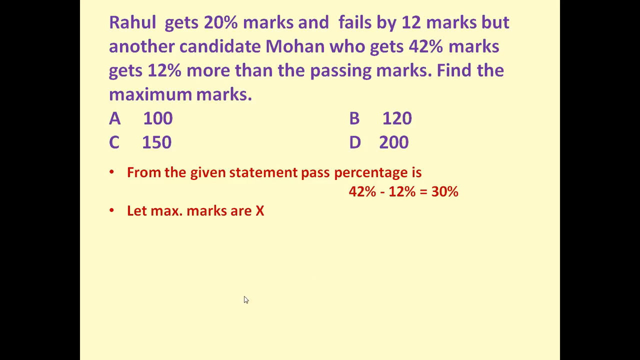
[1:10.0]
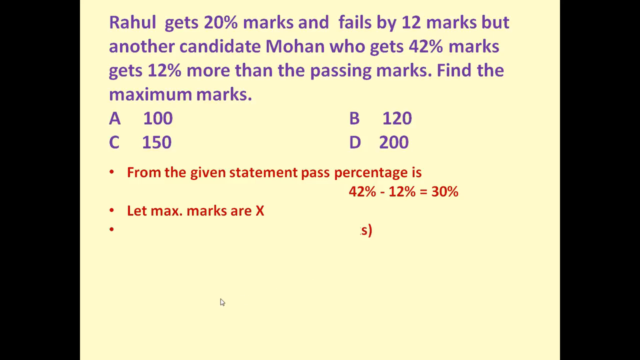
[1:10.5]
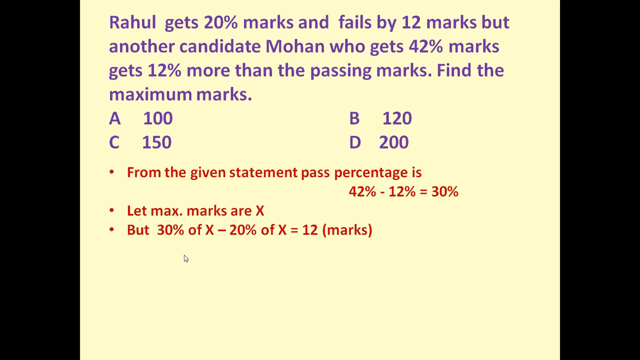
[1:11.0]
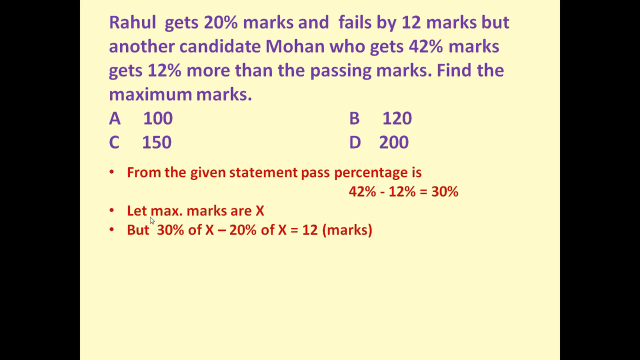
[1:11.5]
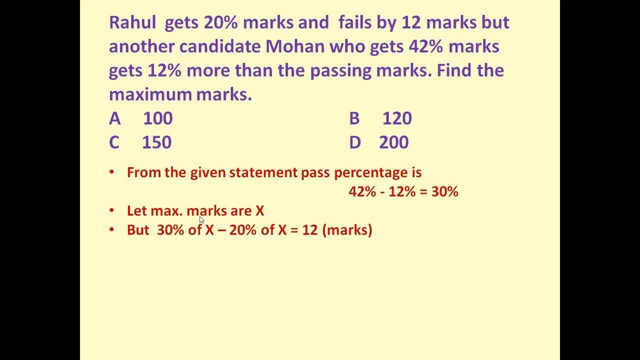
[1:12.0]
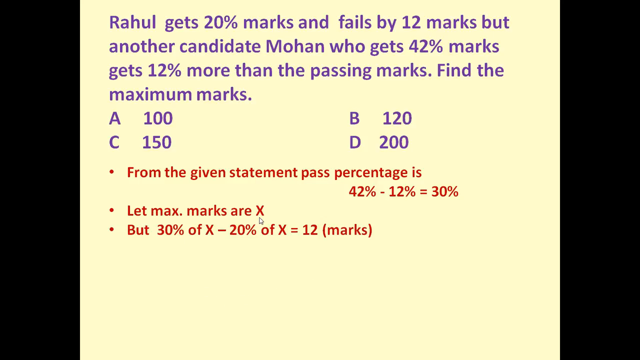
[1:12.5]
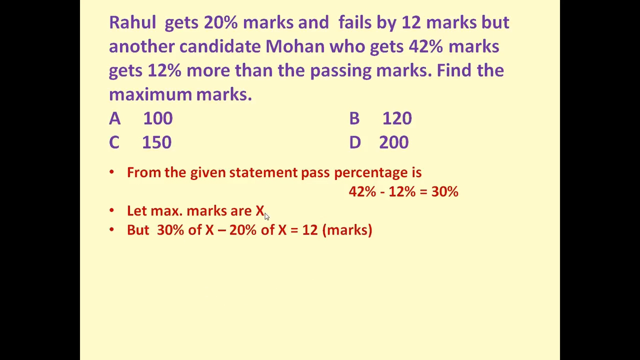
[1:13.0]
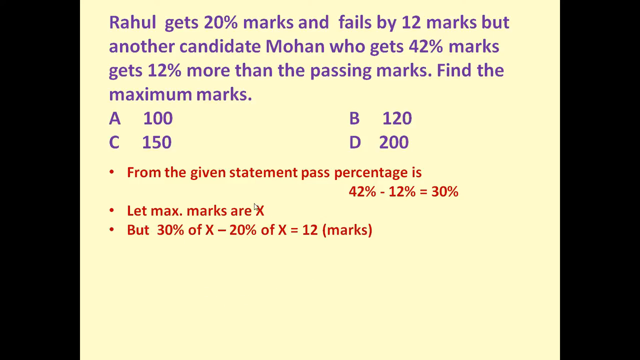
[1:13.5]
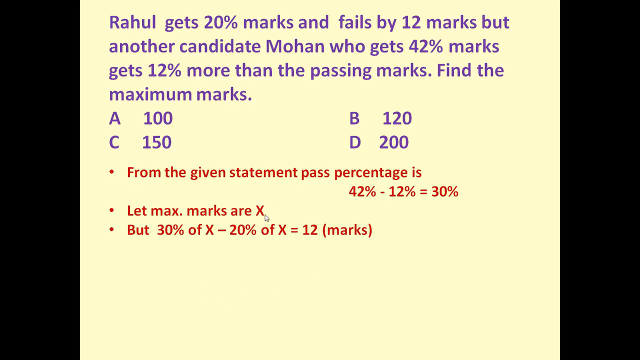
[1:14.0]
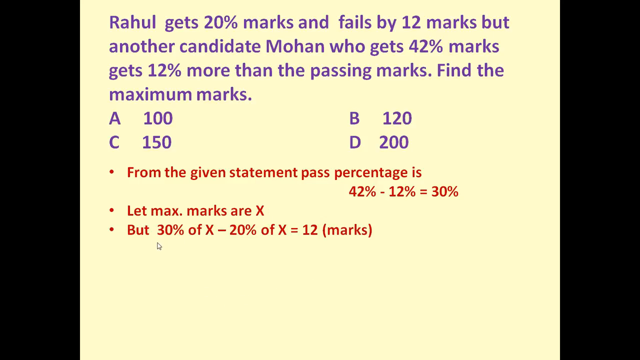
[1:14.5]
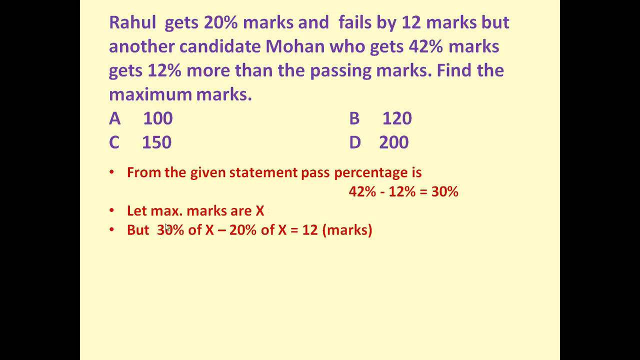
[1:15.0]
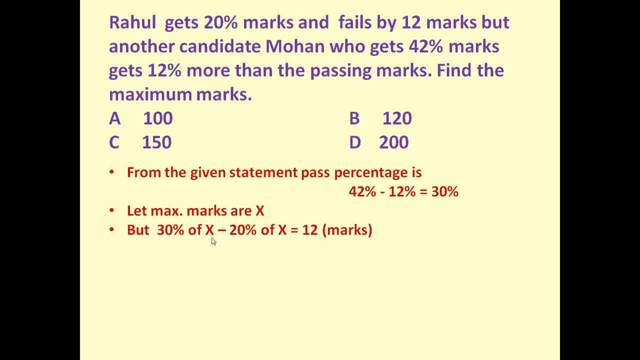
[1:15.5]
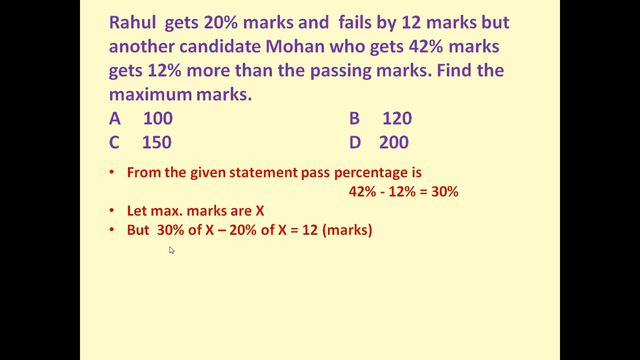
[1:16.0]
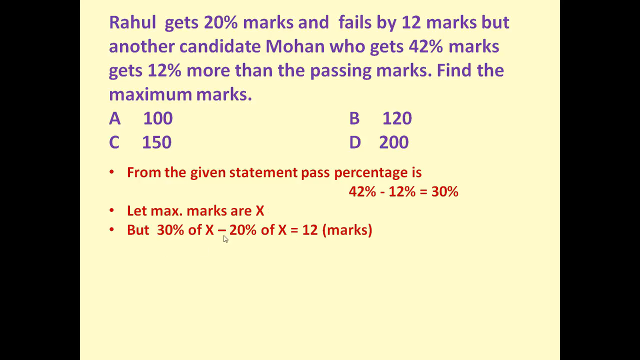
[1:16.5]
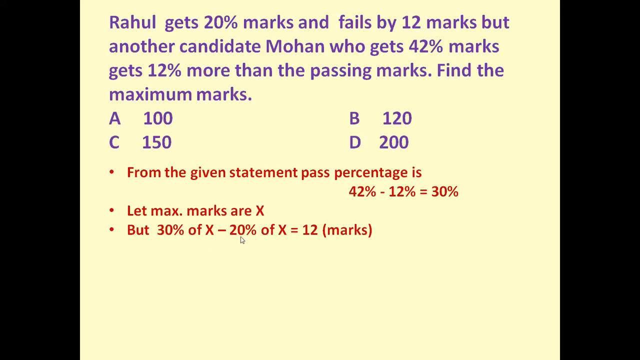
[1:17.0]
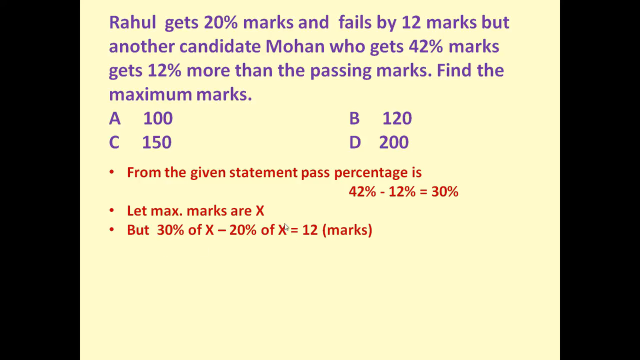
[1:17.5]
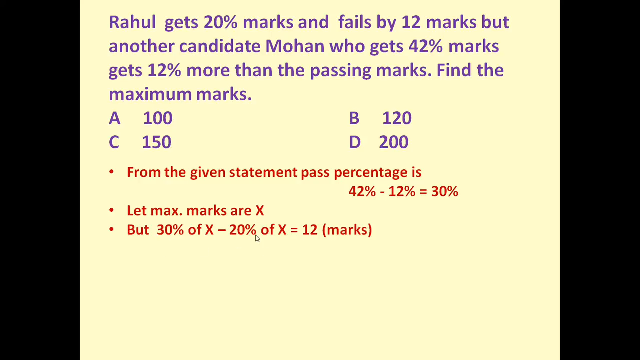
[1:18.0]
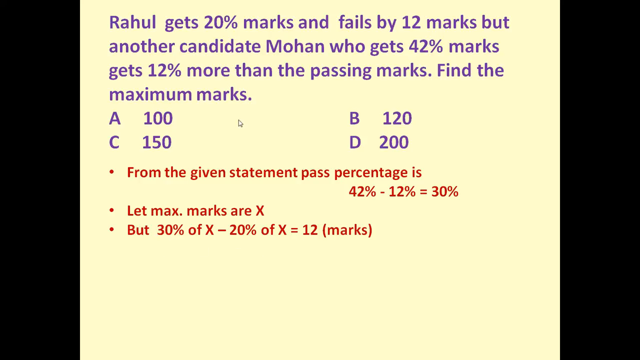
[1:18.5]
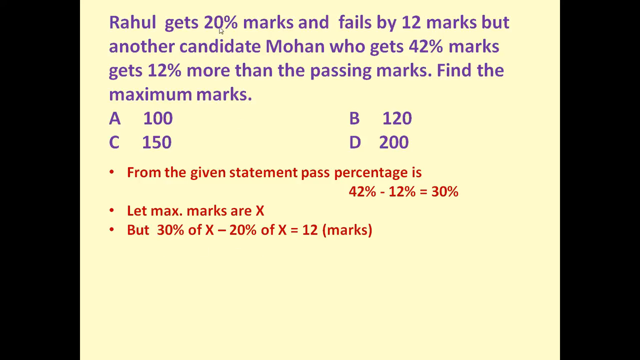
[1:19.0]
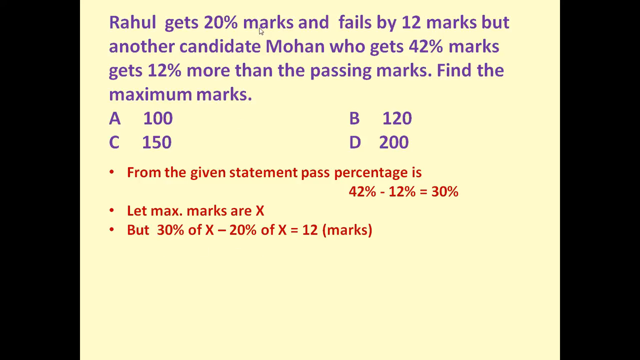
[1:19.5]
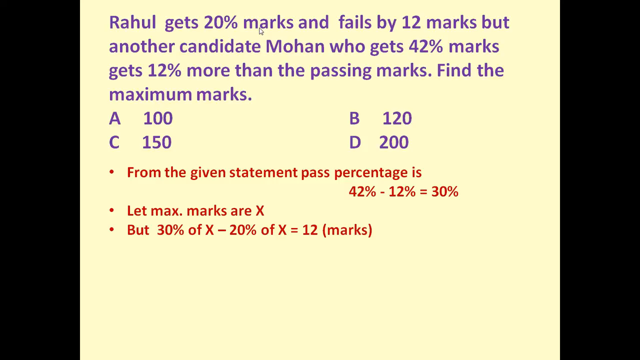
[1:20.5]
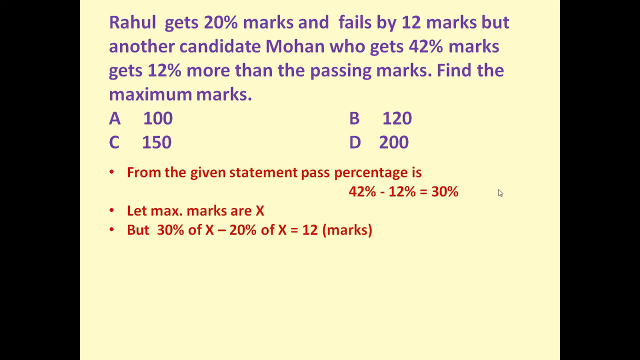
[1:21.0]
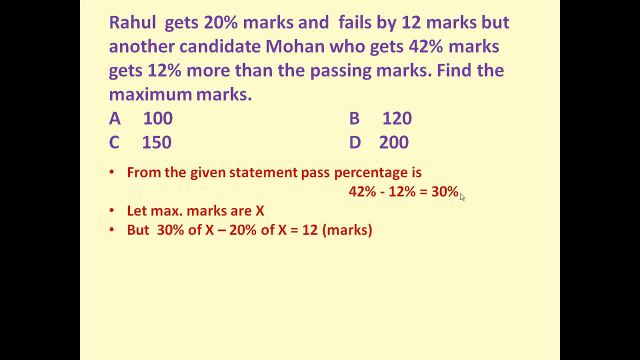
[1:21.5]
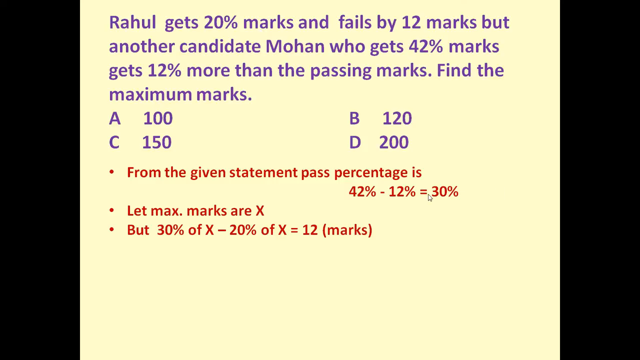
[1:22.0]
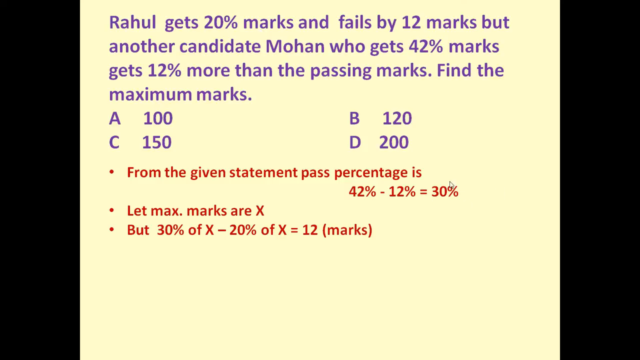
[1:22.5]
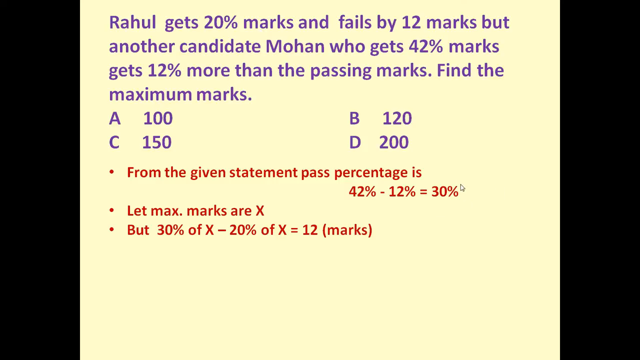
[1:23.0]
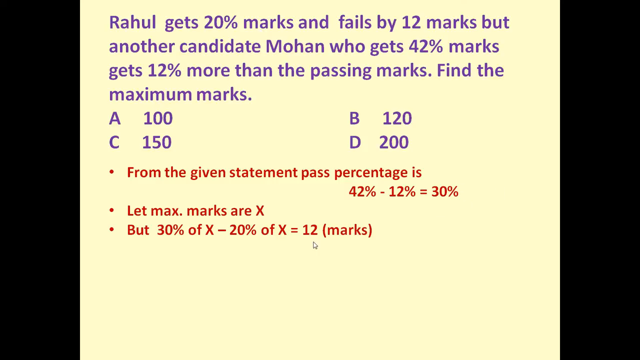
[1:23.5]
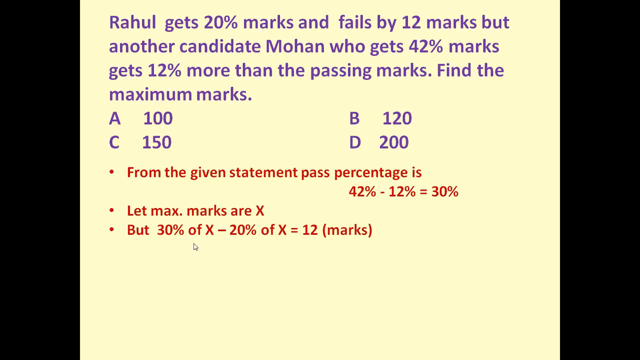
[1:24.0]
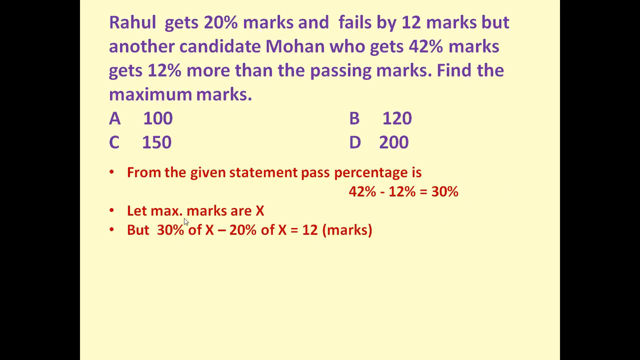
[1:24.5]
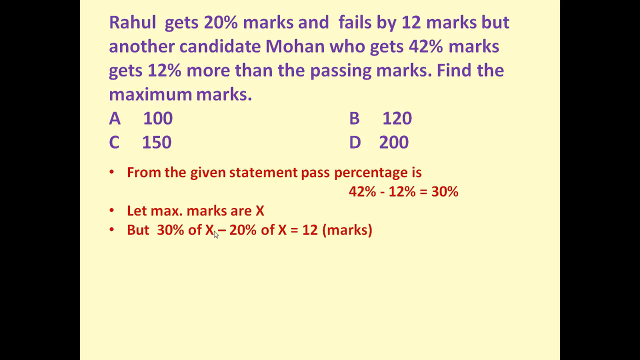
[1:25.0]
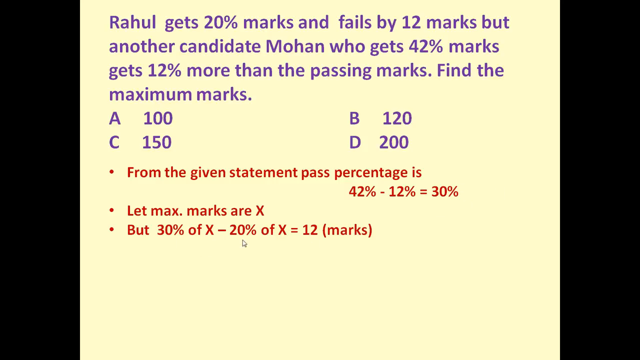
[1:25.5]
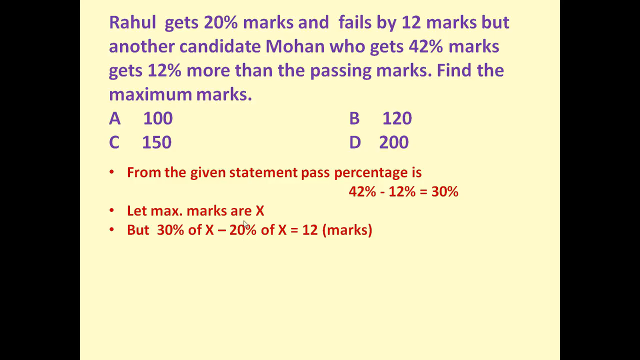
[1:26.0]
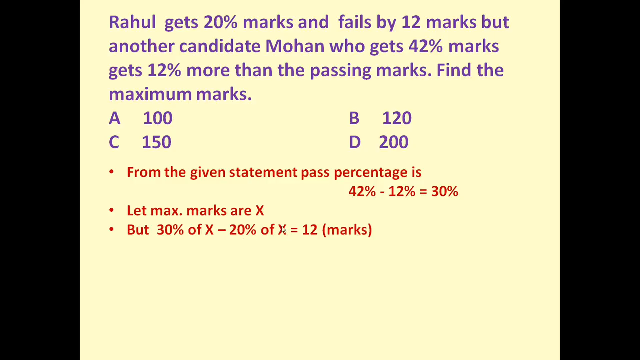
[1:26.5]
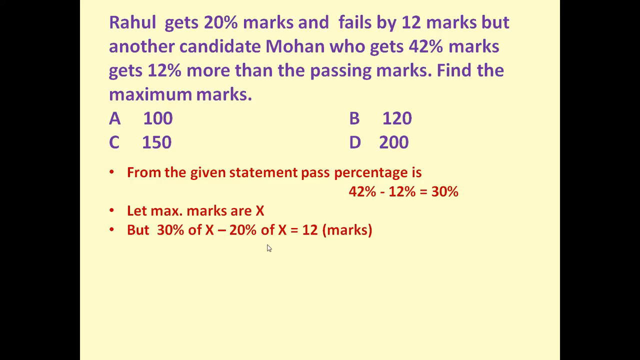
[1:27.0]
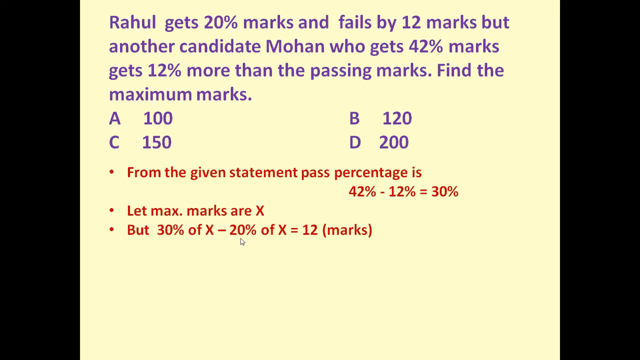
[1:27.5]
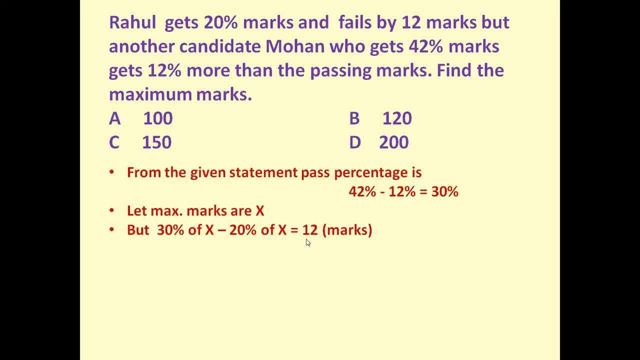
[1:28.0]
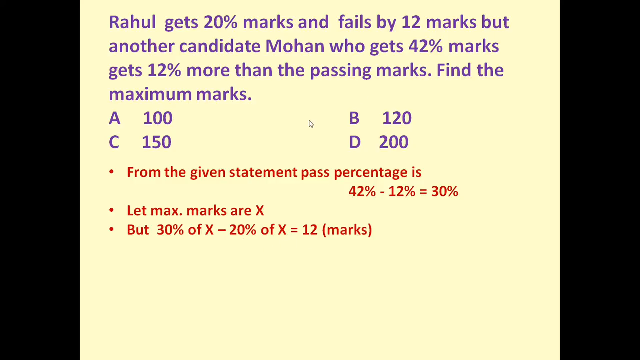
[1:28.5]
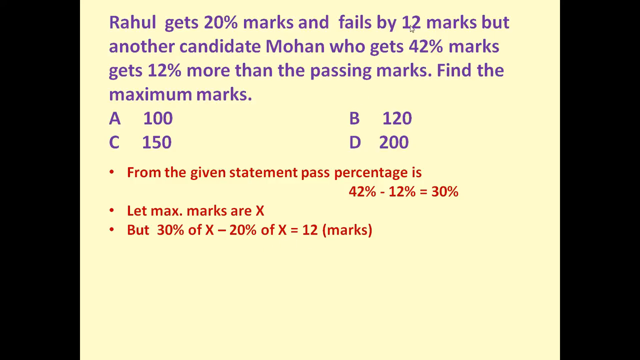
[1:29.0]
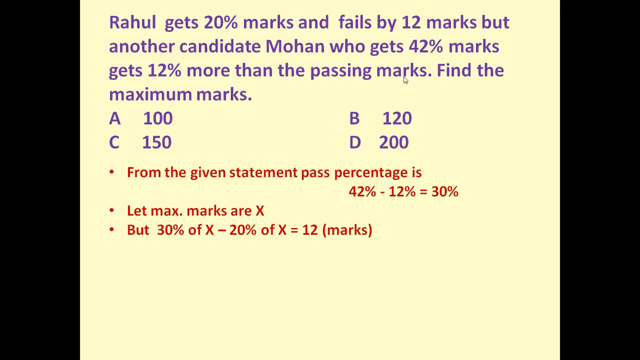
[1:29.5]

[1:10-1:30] The problem is shown again with its four options: A 100, B 120, C 150, D 200. Starting with Mohan, who gets 42% marks, 12% more than the passing marks, the pass percentage is worked out as 42 minus 12 equals 30%. Using Raul's information, with the maximum marks as X, the equation is set up: 30% of X minus 20% of X equals 12 marks, where 30% is the pass percentage and 20% is what Raul gets.